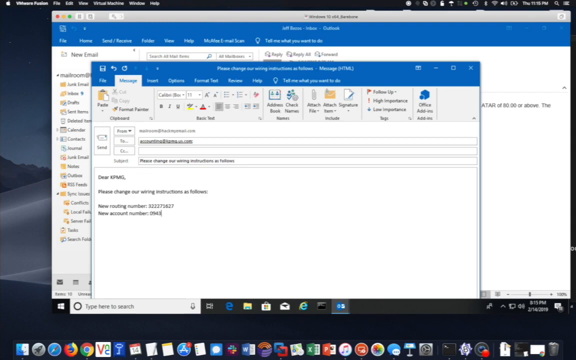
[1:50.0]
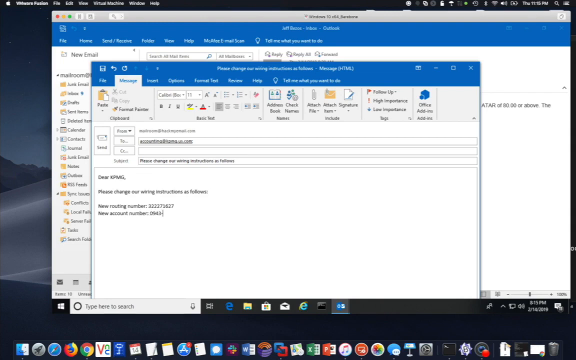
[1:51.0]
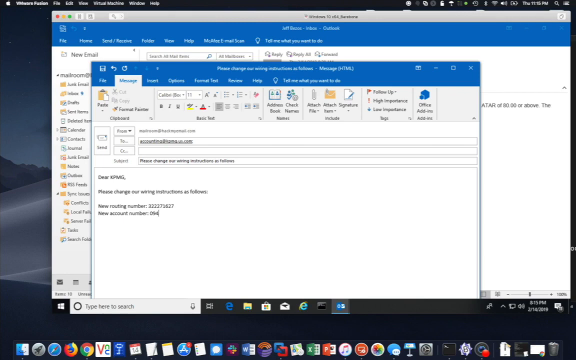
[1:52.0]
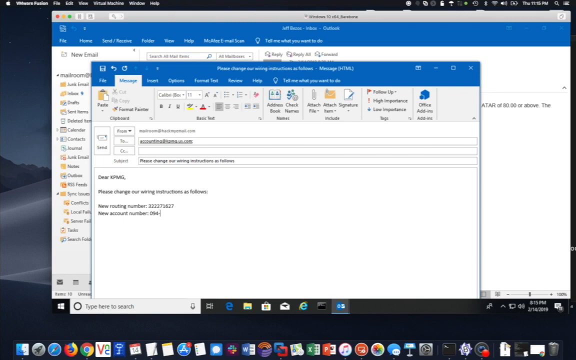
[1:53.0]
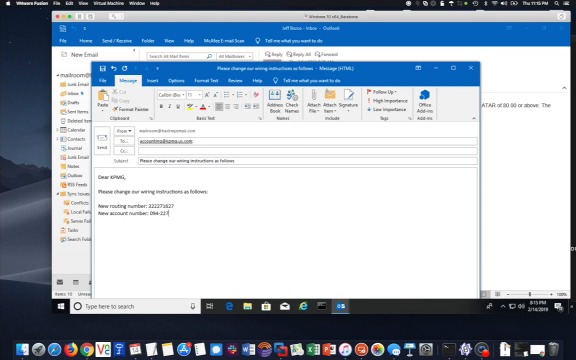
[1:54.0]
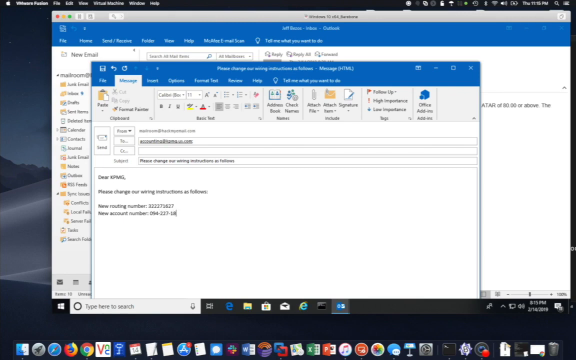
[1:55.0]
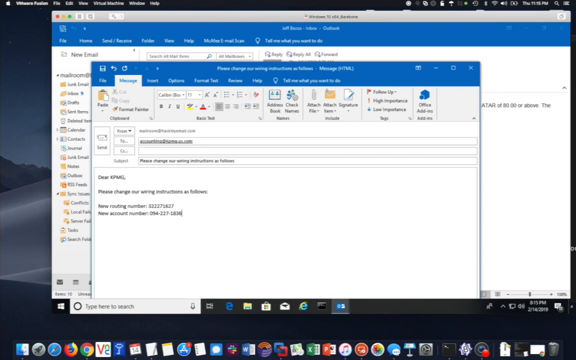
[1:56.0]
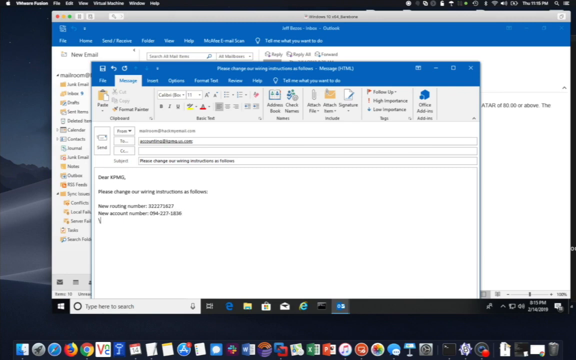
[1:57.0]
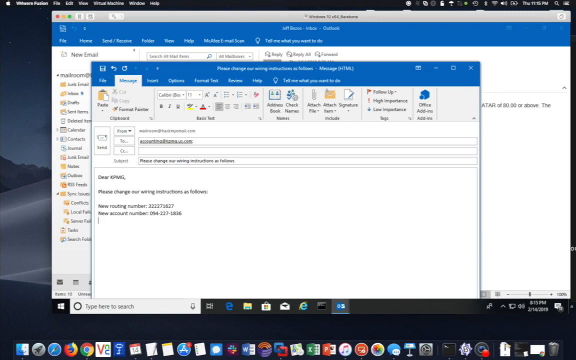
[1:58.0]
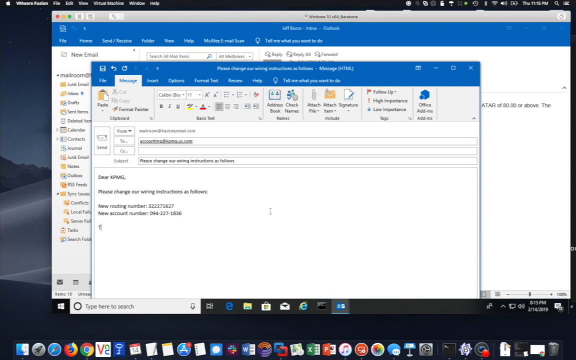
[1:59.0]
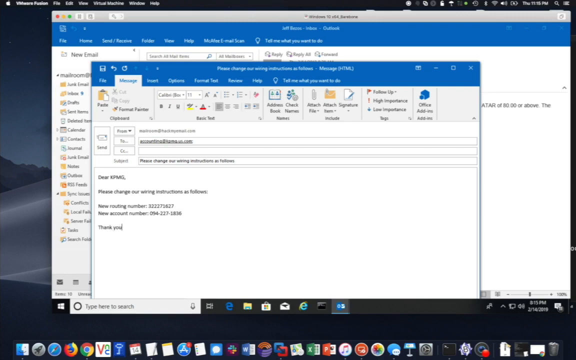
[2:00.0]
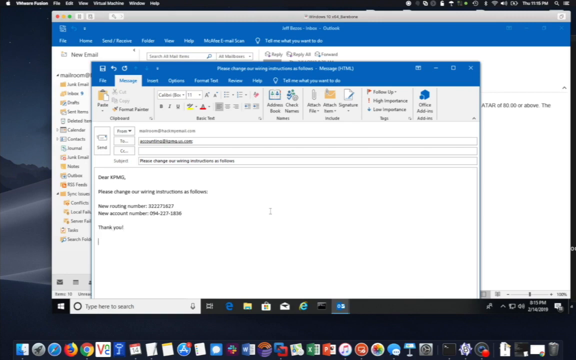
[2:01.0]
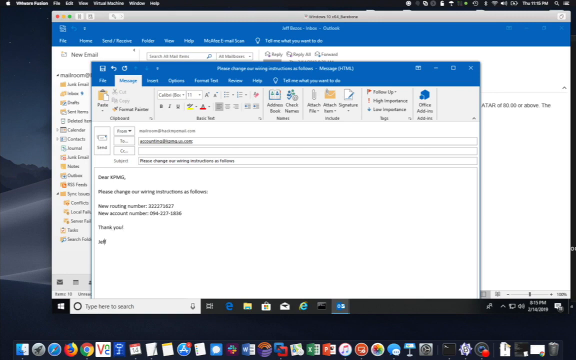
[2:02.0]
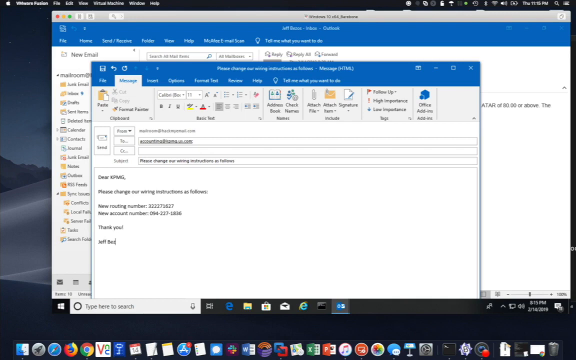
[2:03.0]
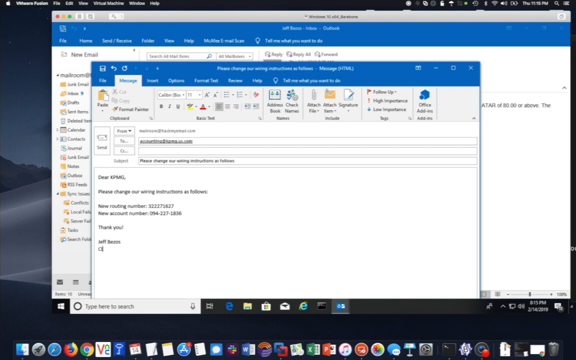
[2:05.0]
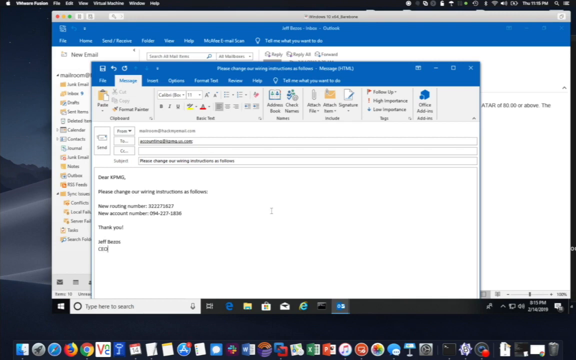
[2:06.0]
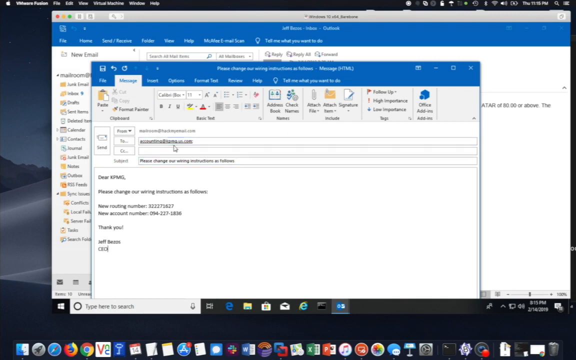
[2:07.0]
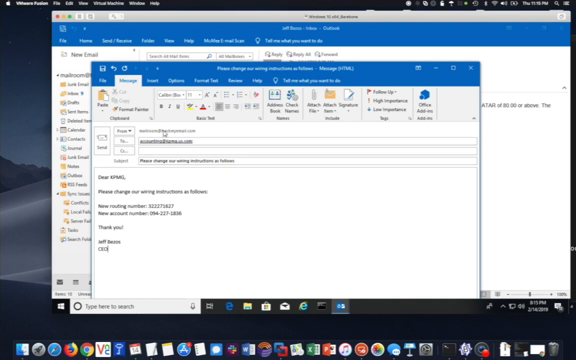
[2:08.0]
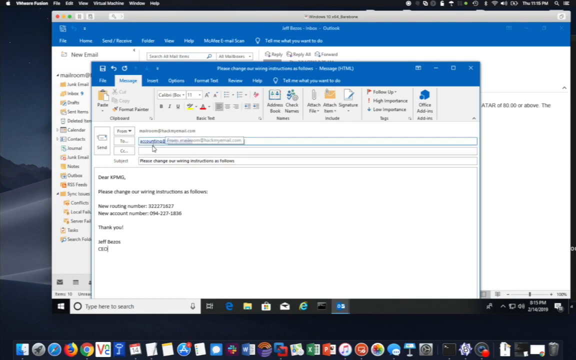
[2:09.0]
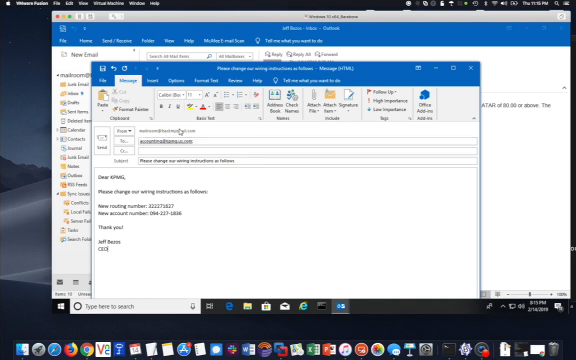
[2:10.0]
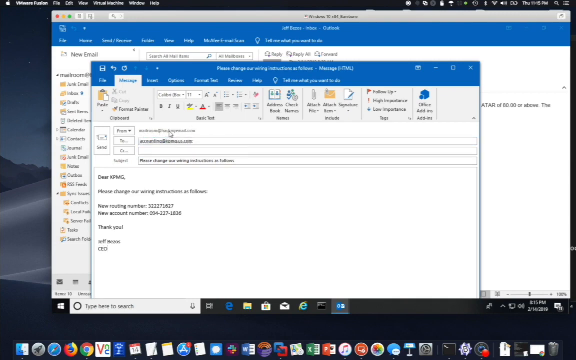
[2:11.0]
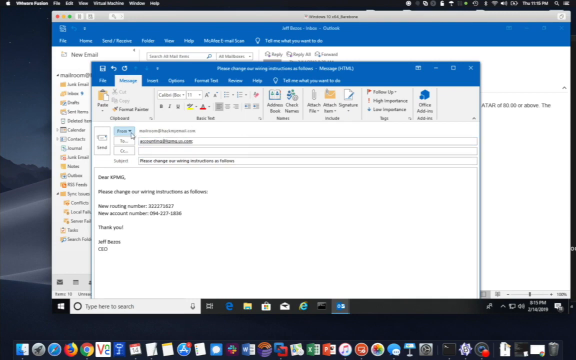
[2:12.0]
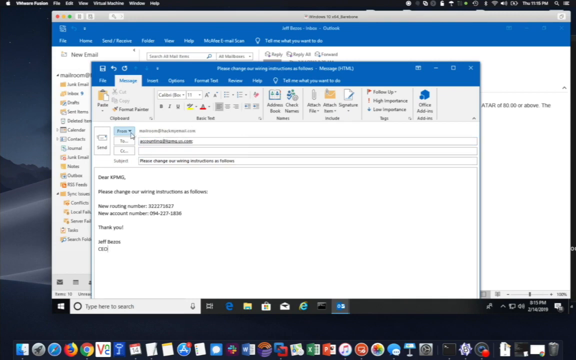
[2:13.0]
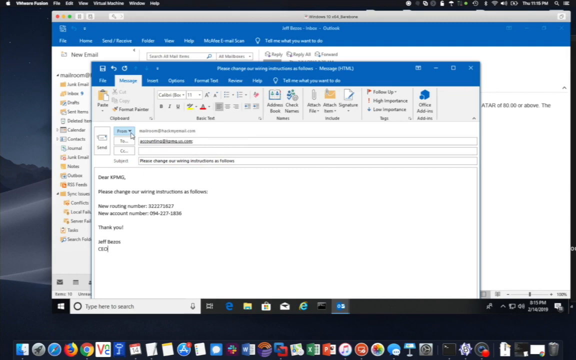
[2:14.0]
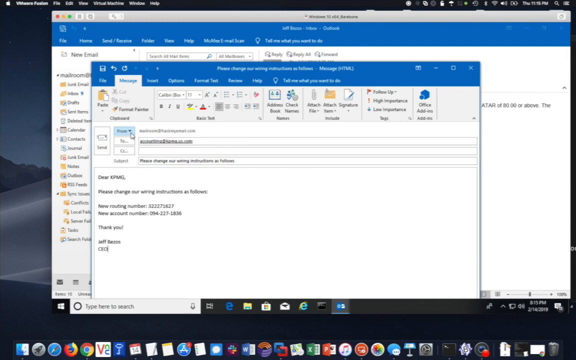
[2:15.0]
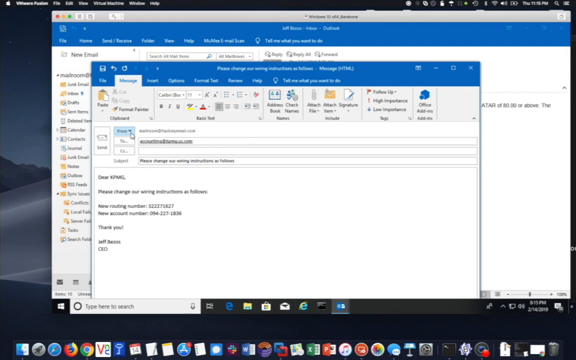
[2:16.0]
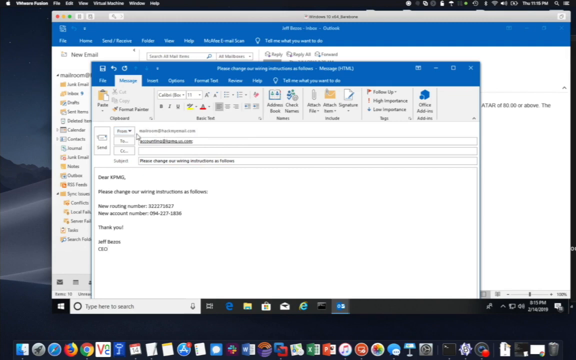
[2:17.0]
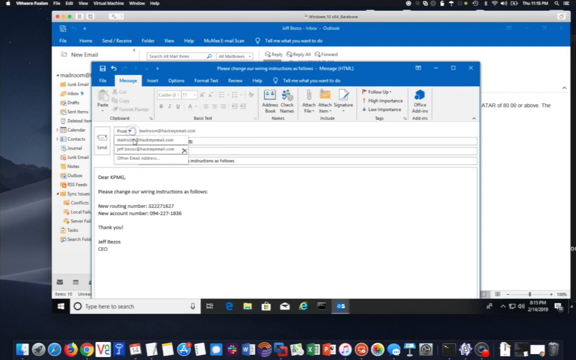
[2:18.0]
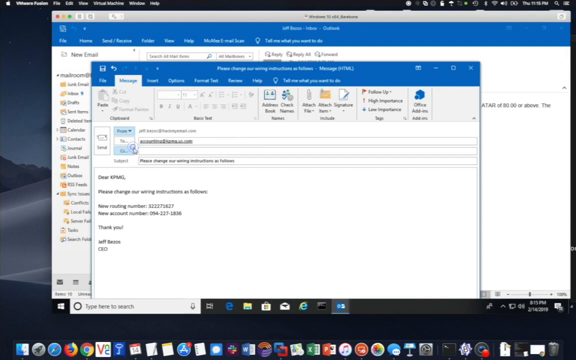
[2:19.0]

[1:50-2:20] On an open computer screen, someone types an email in what looks like Outlook; an open email homepage is behind a smaller page in which the message is being written. Someone types in the message box. So far the email looks as though it reads "Please change our wiring authentications as follows." A line reads "New routing number" with some numbers after it, and another line says "New account number" with another group of numbers. They type "Thank you" at the bottom of the message, and it is signed Jeff Bezos CEO. The cursor then briefly hovers over the email address the message is being sent from as the shot ends.